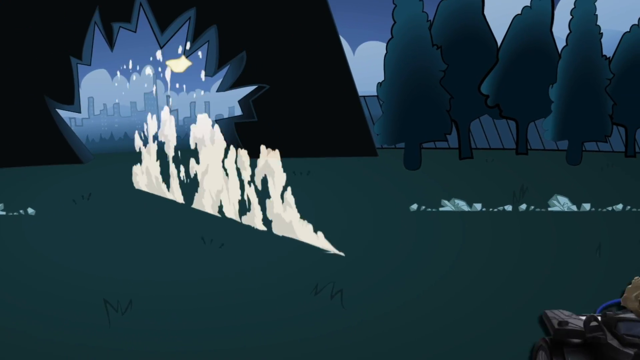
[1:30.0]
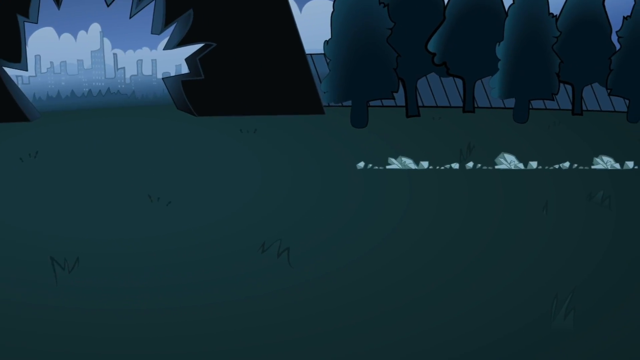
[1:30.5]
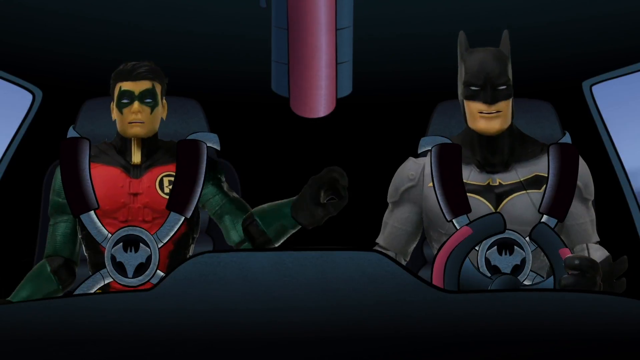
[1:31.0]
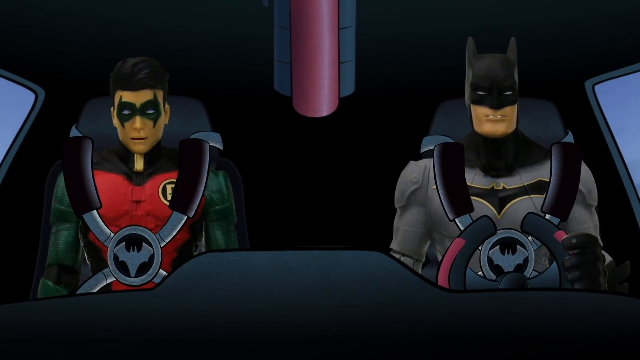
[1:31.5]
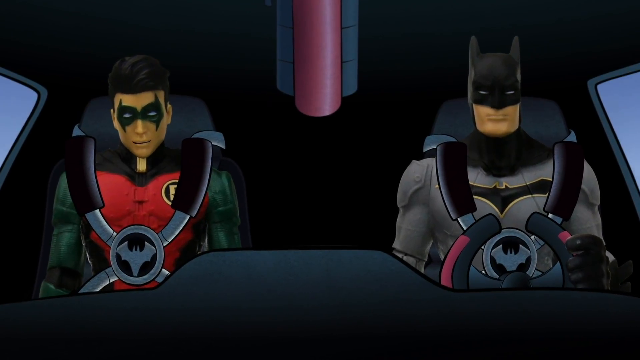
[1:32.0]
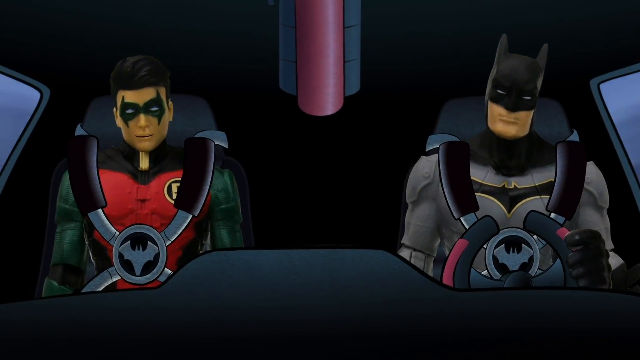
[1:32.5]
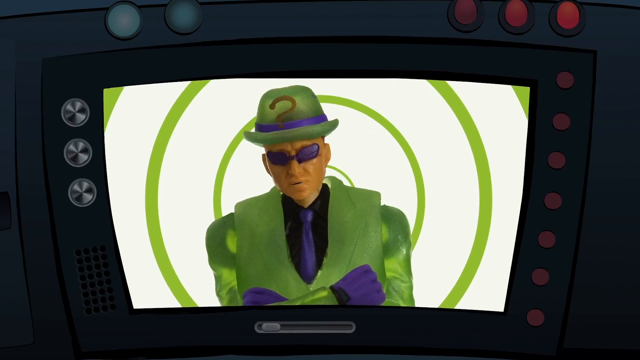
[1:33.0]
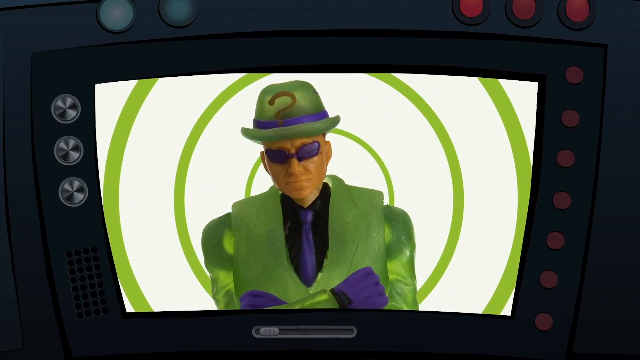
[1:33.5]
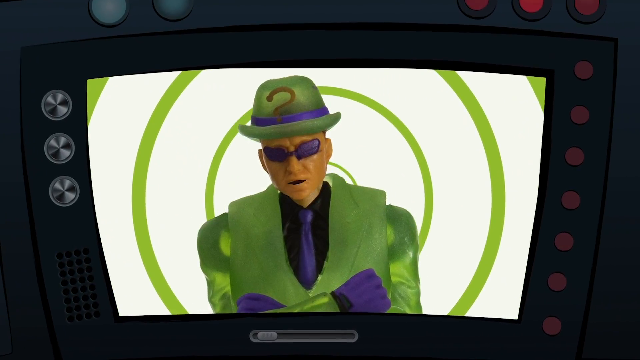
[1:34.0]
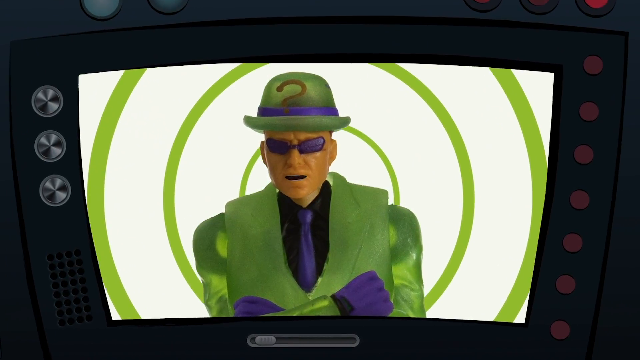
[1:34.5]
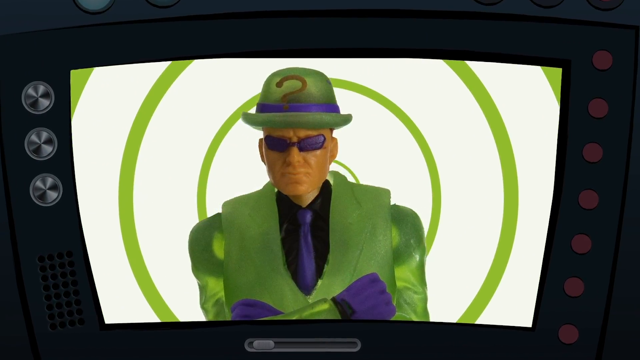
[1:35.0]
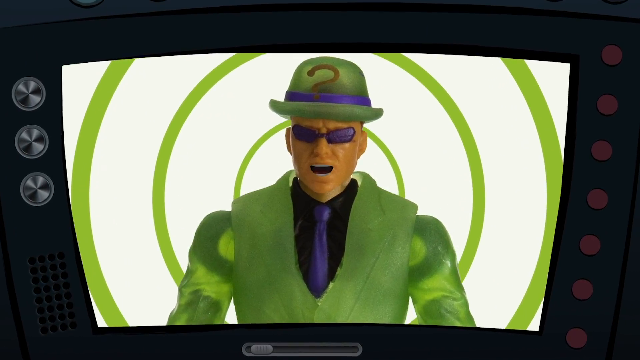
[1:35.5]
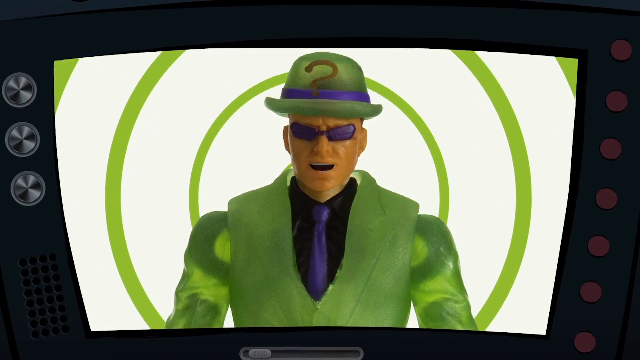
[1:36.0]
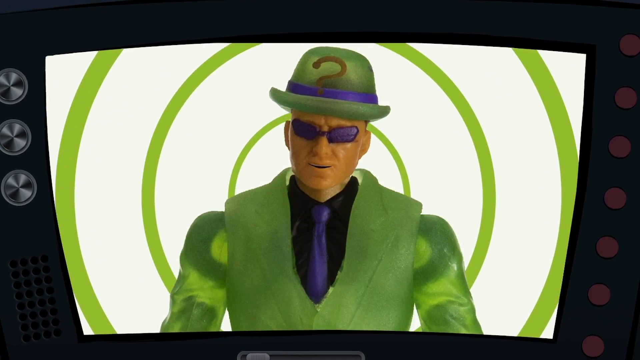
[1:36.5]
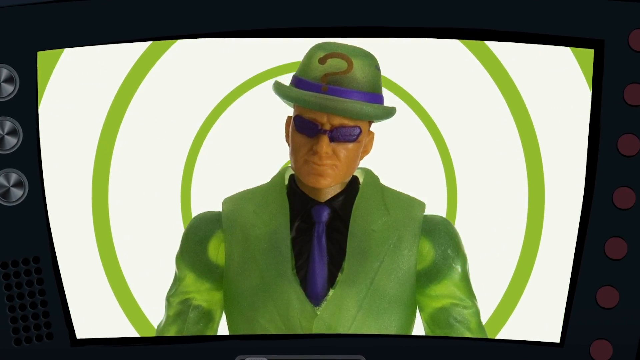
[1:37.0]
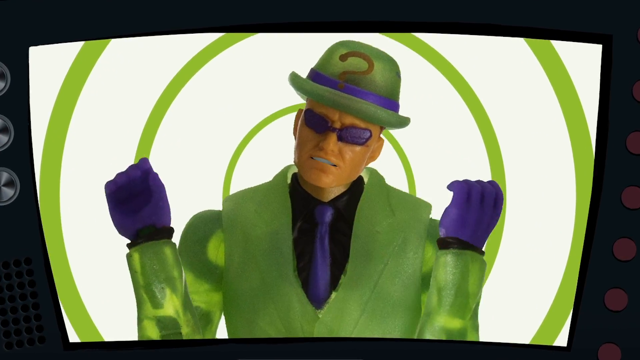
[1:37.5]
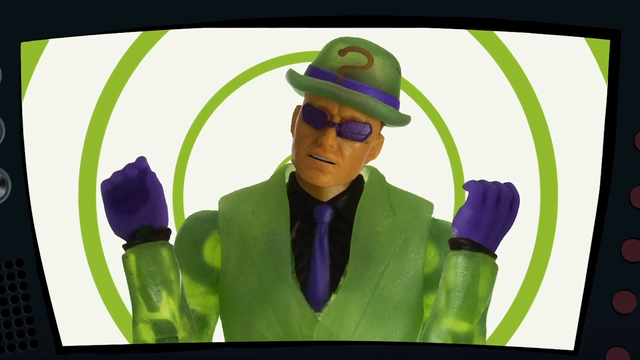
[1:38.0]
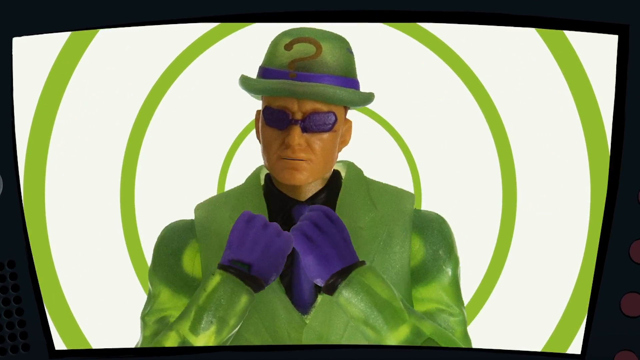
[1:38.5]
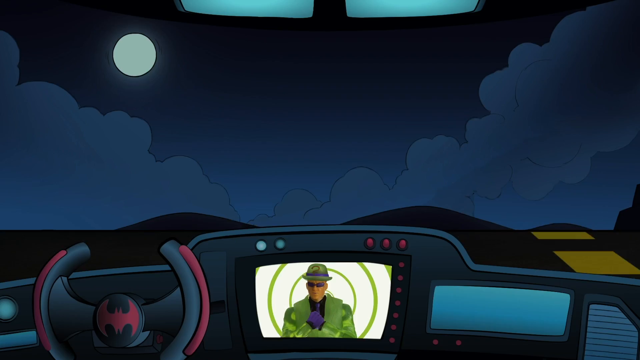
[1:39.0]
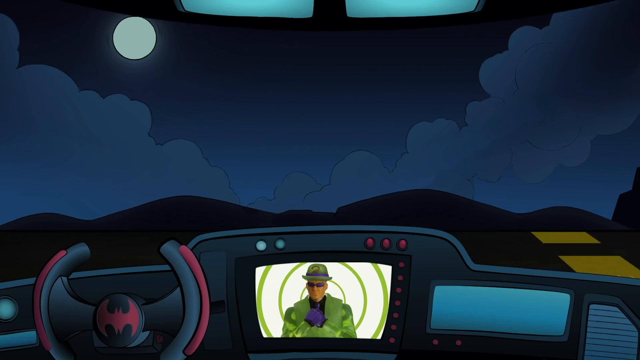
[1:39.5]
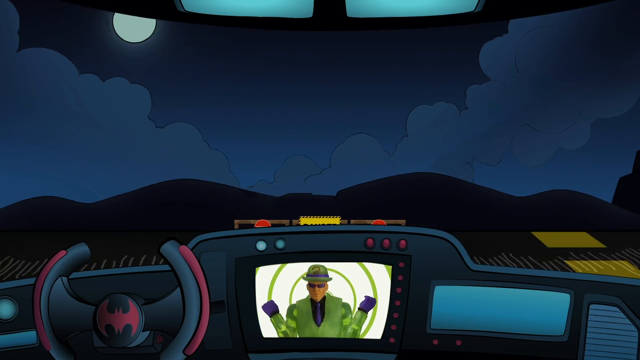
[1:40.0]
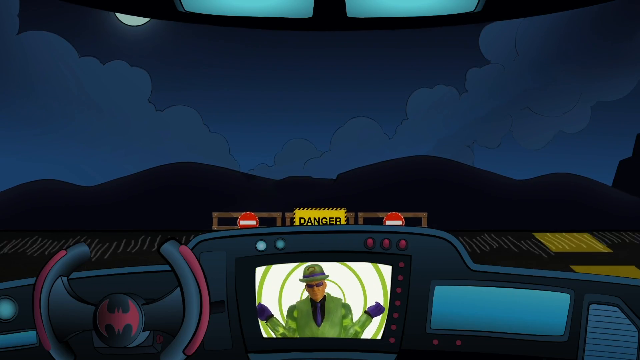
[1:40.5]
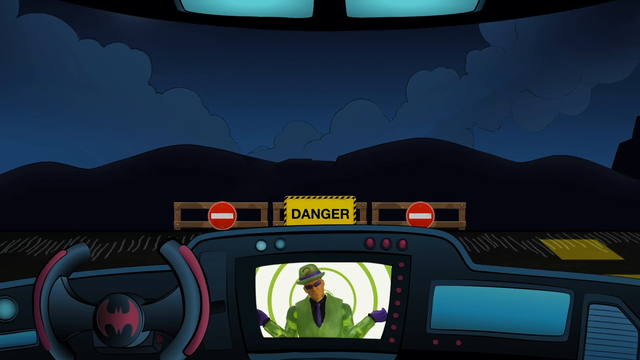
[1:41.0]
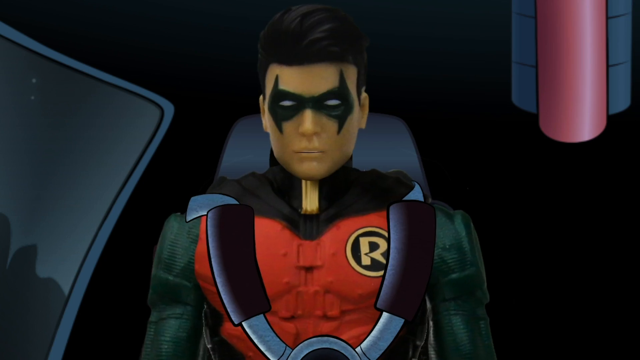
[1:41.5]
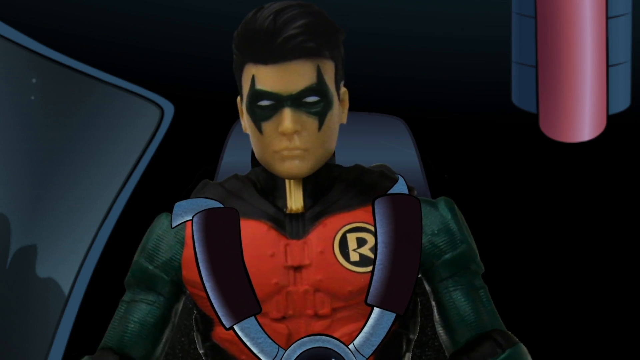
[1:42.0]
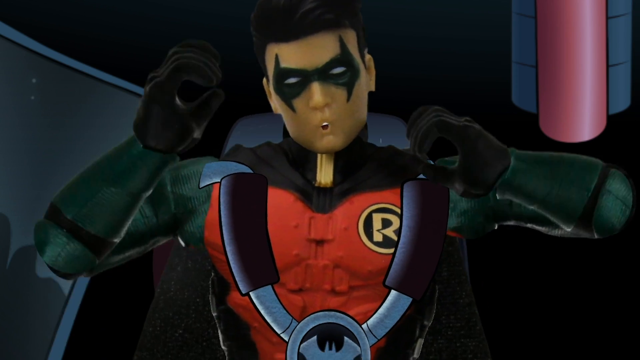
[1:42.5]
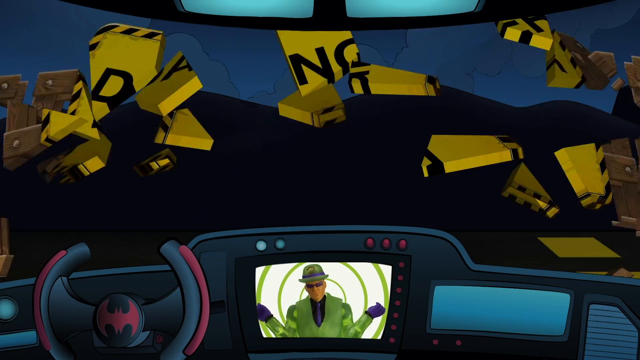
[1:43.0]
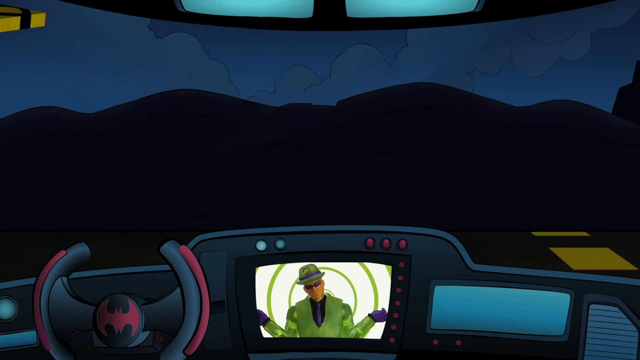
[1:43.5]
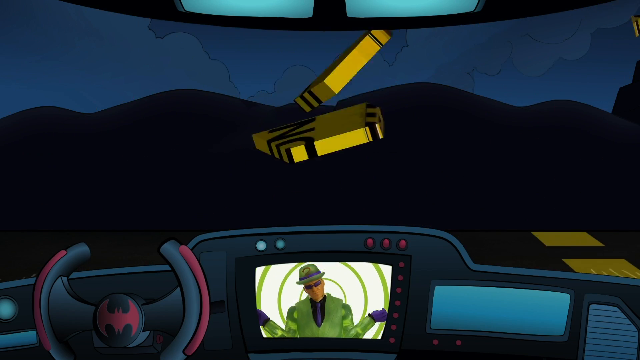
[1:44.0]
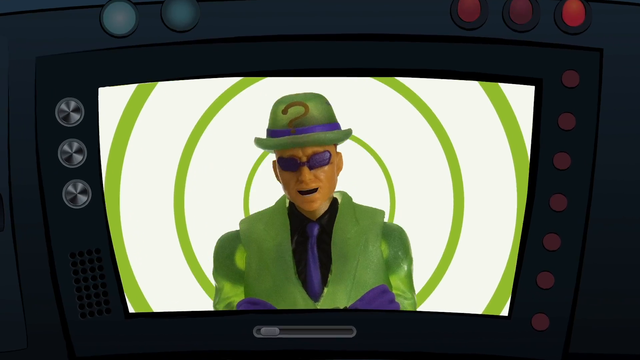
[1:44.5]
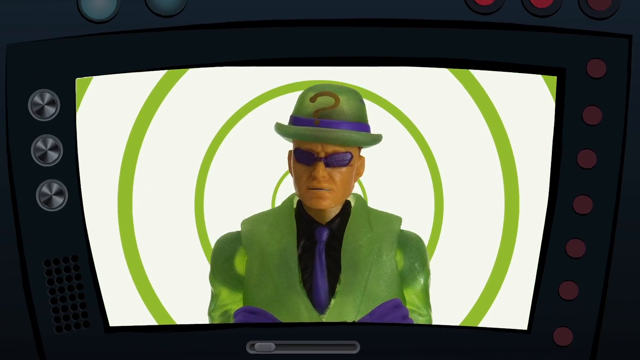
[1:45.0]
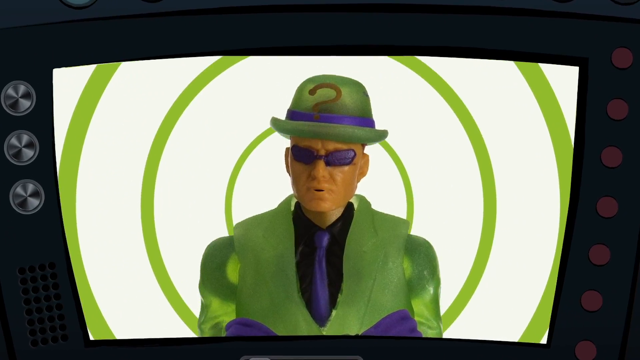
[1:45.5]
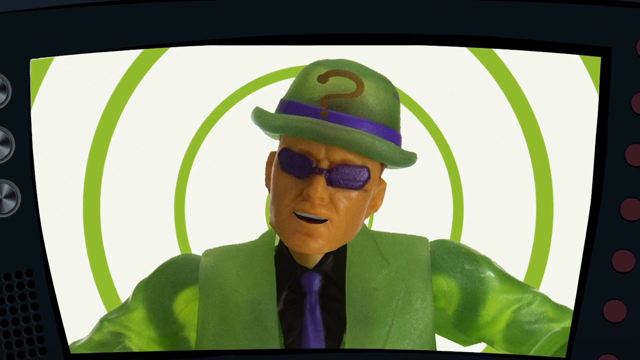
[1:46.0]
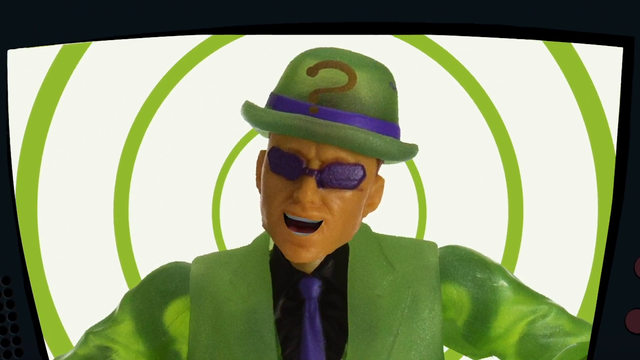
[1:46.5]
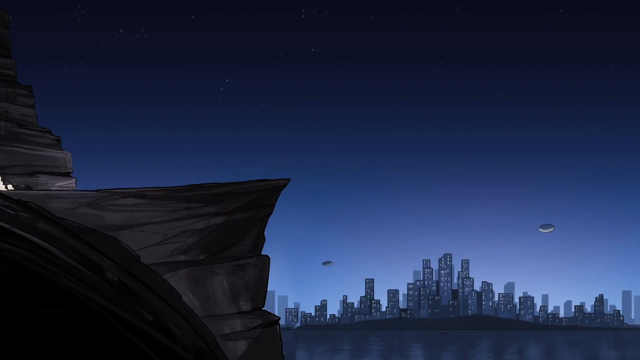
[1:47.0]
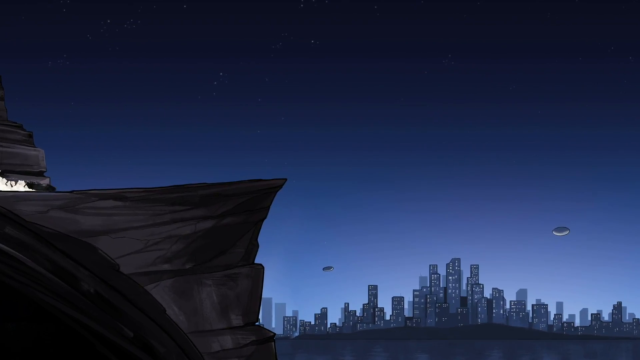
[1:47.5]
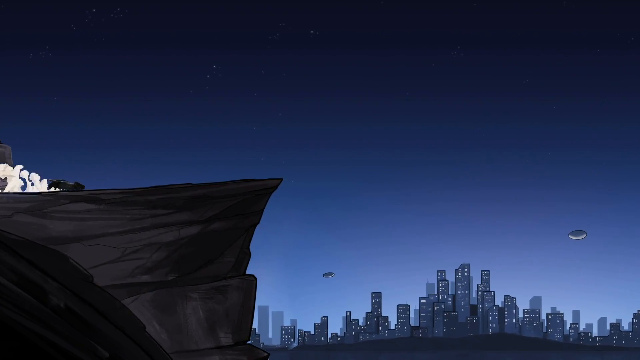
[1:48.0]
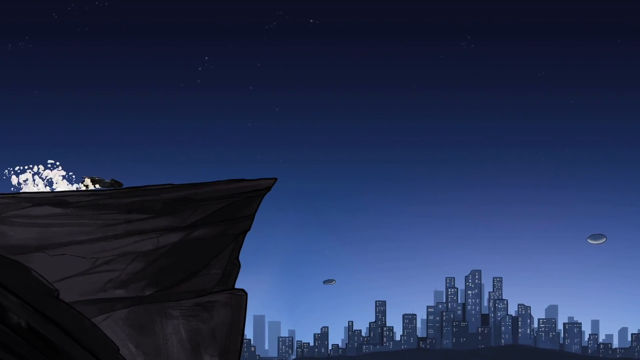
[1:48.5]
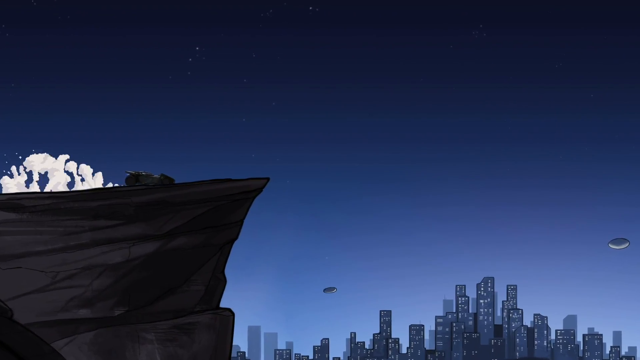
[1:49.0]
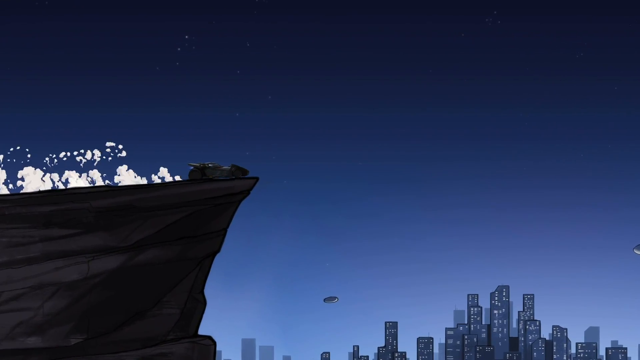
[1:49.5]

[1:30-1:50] The Batmobile pulls out a cannon on top, shoots a hole in a wall and drives through the hole. It speeds off, and Robin, somewhat jolted, holds on. Batman and Robin are animated like action figures or claymation, while the car itself is 2D drawn. The Riddler pops up on the screen talking, arms crossed, with a hypnotic green circle background. A head-on view from inside looks out through the windshield as the Batmobile drives toward something marked "danger" that looks like a roadblock of some sort, with the Riddler on the screen below it and the steering wheel visible. Robin appears to get up and puts his hands up. The car breaks through the barricades. The Riddler seems to say something, and the Batmobile, going very fast without stopping, jumps off a cliff.